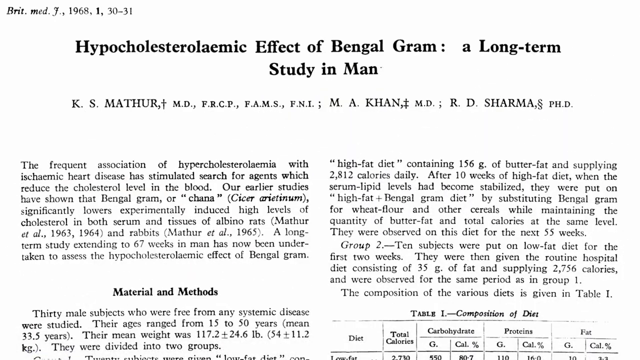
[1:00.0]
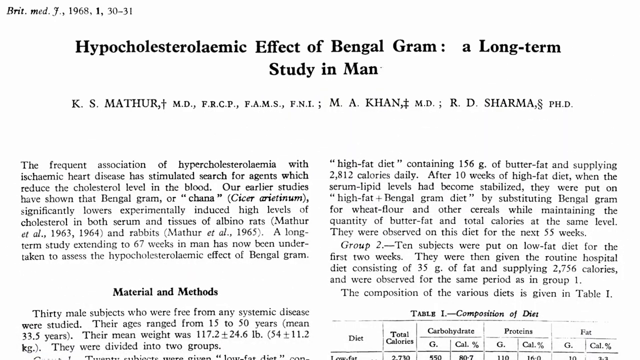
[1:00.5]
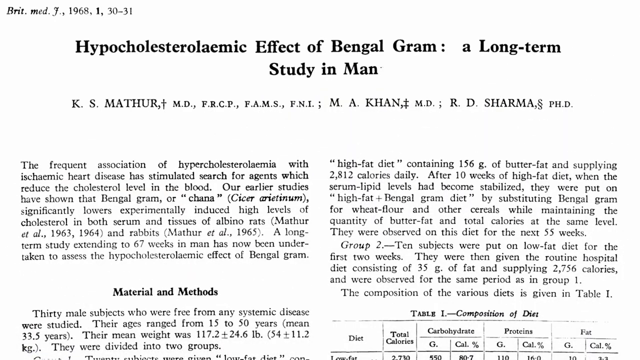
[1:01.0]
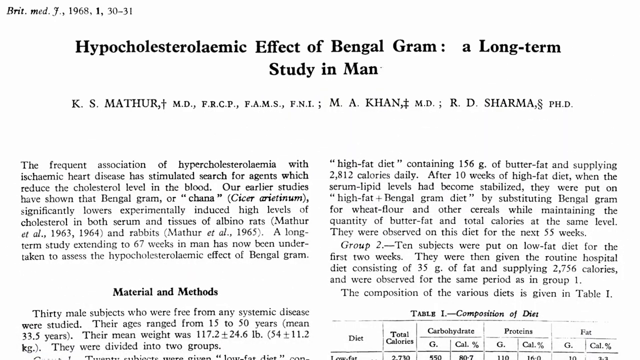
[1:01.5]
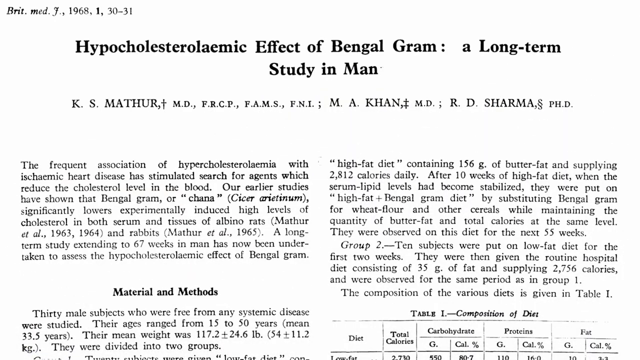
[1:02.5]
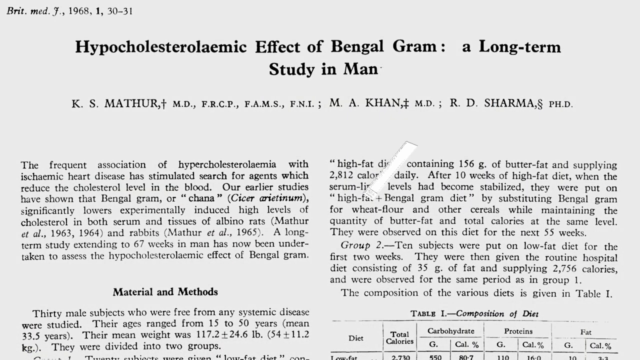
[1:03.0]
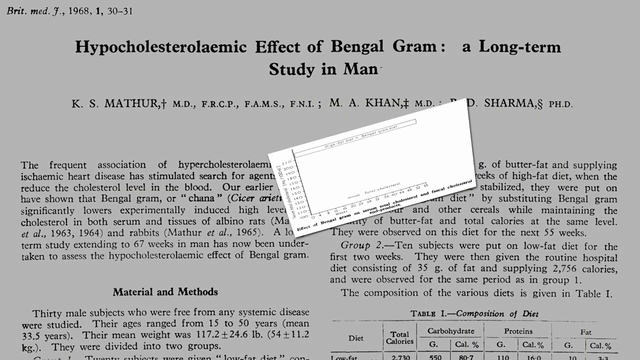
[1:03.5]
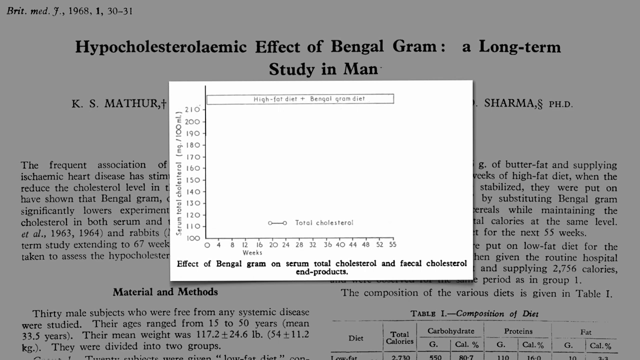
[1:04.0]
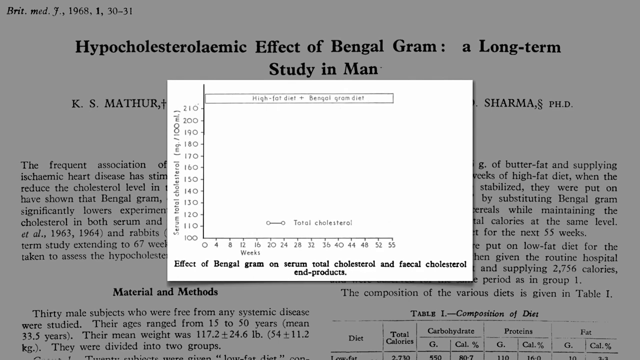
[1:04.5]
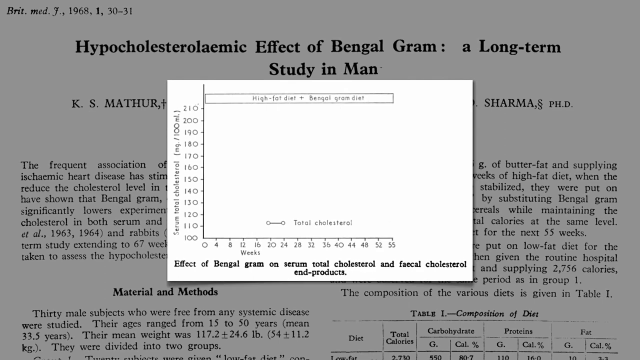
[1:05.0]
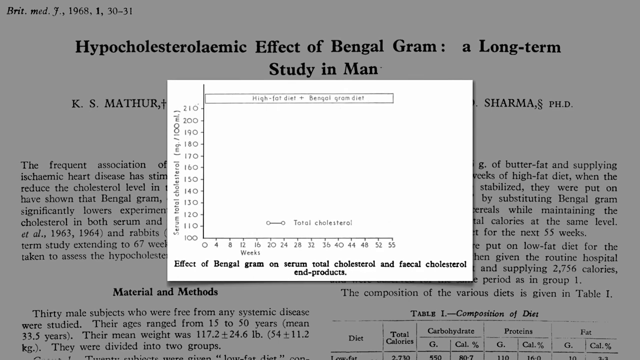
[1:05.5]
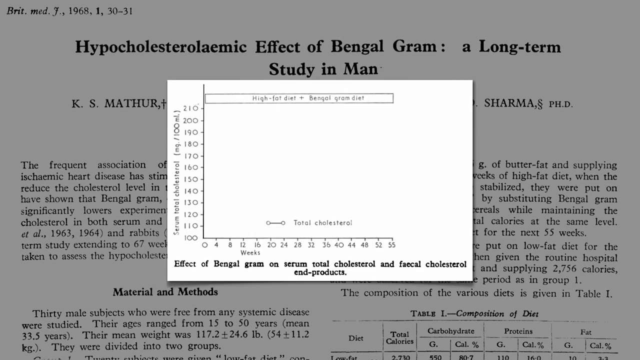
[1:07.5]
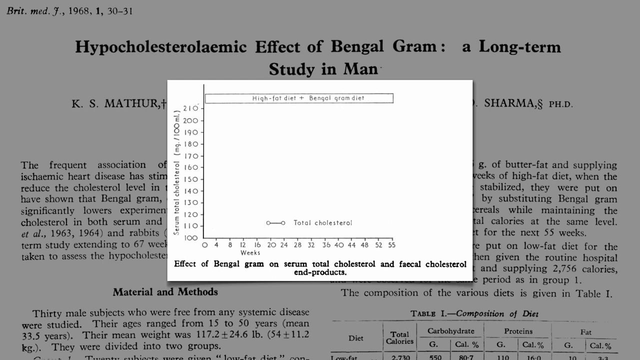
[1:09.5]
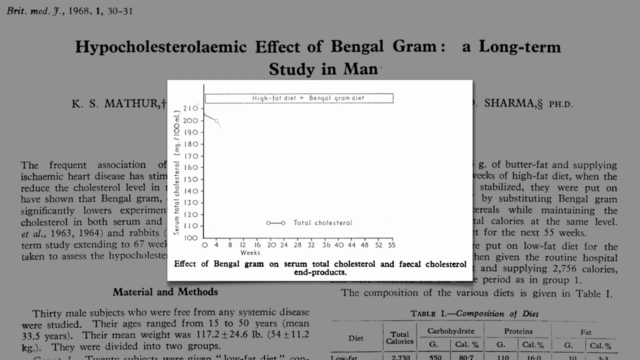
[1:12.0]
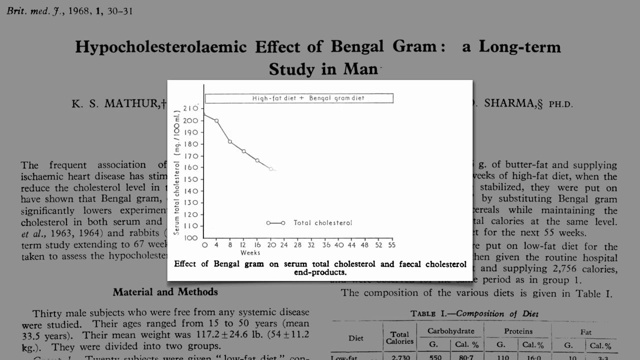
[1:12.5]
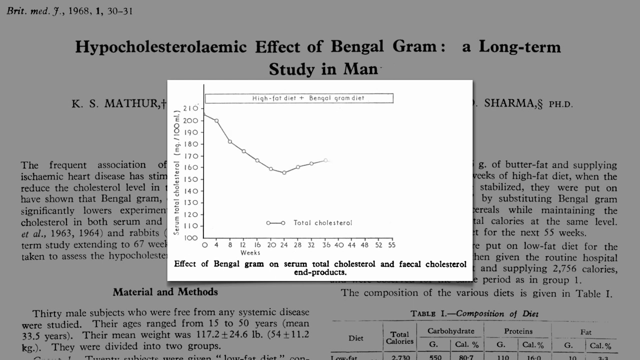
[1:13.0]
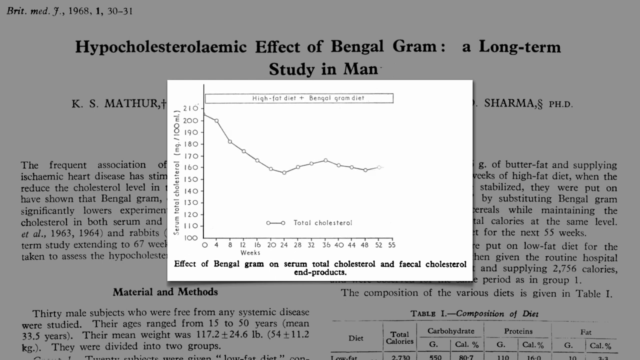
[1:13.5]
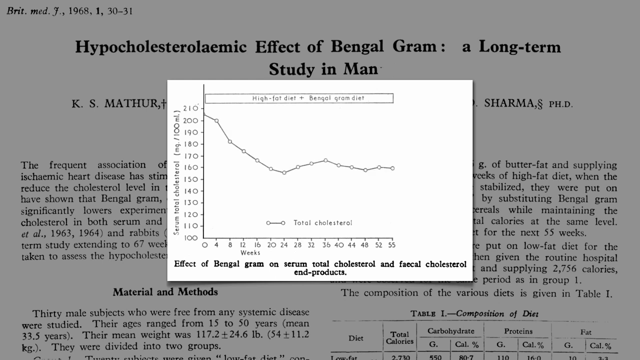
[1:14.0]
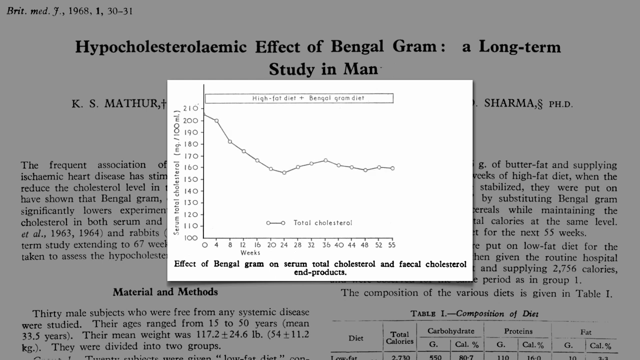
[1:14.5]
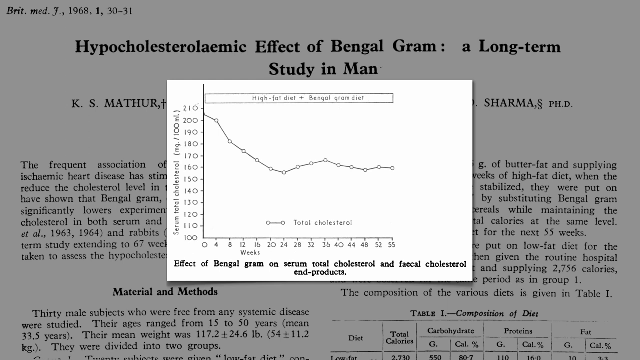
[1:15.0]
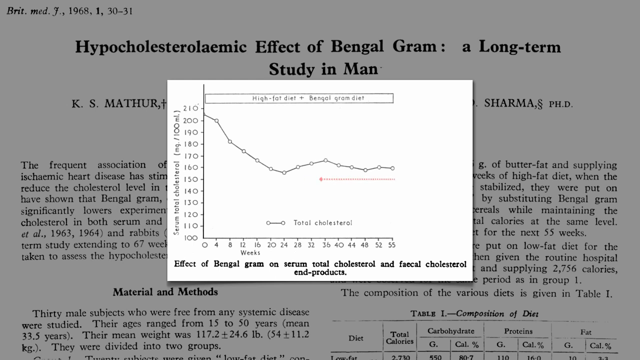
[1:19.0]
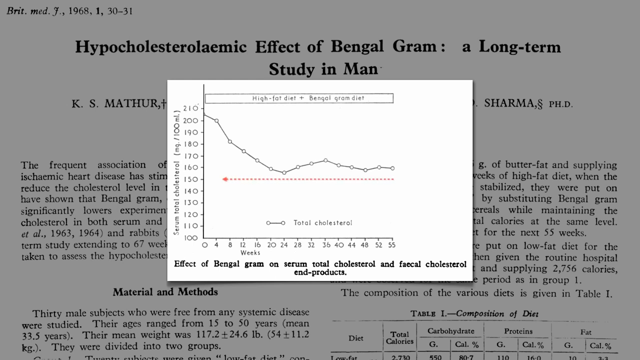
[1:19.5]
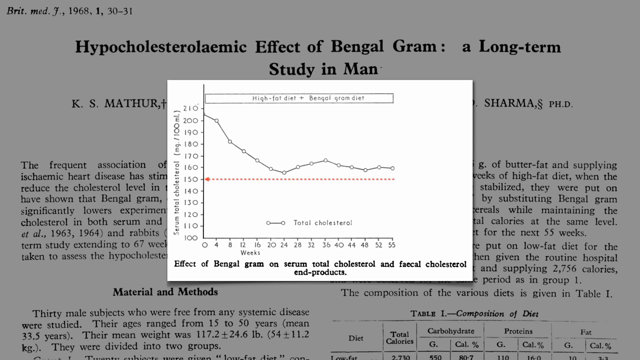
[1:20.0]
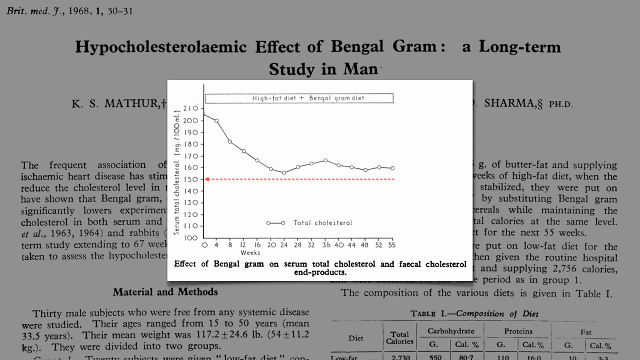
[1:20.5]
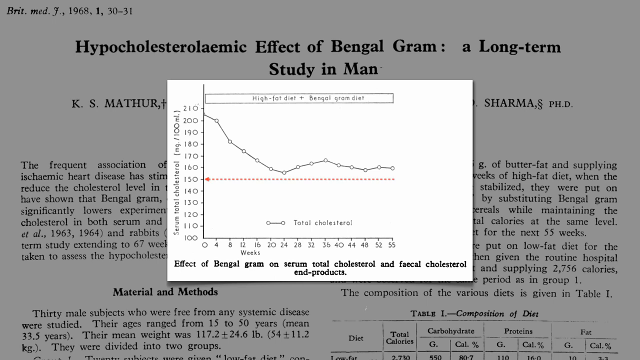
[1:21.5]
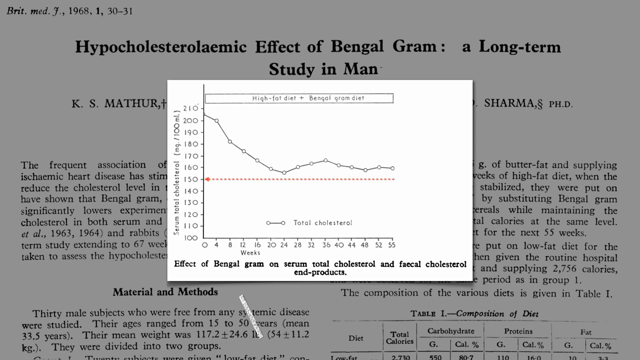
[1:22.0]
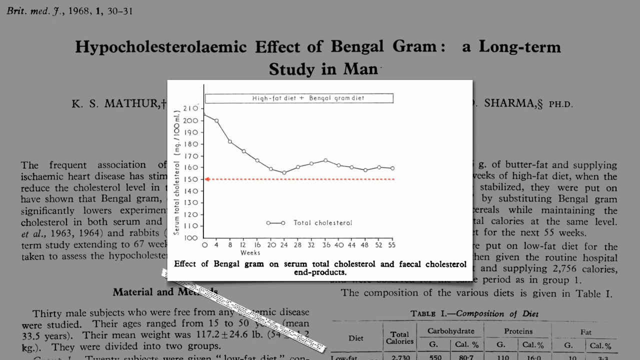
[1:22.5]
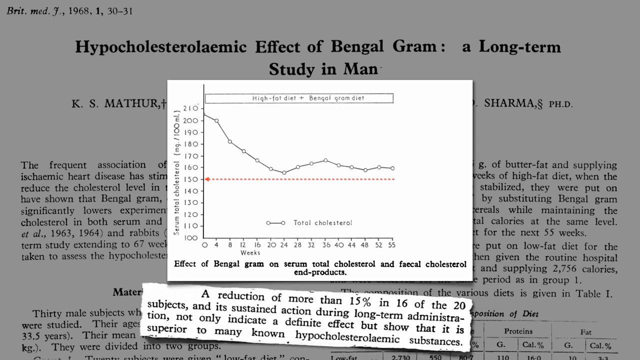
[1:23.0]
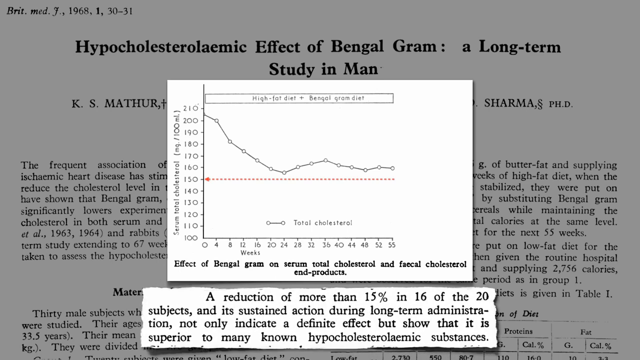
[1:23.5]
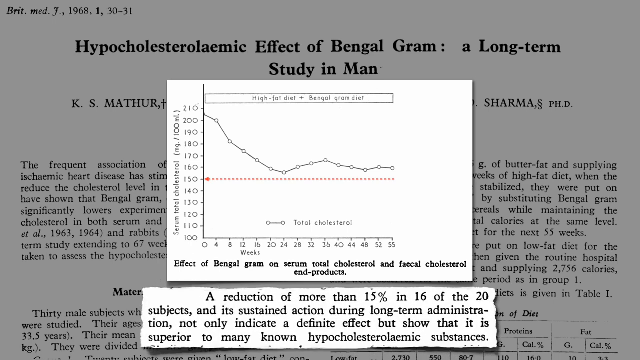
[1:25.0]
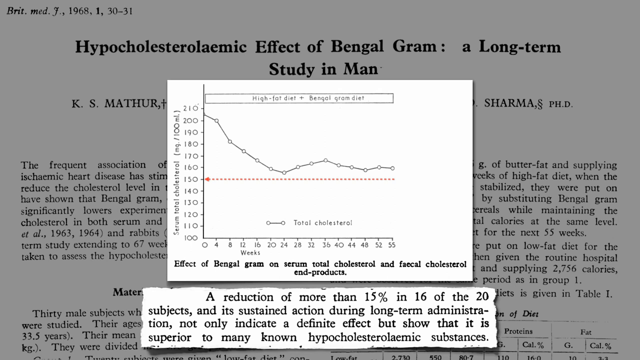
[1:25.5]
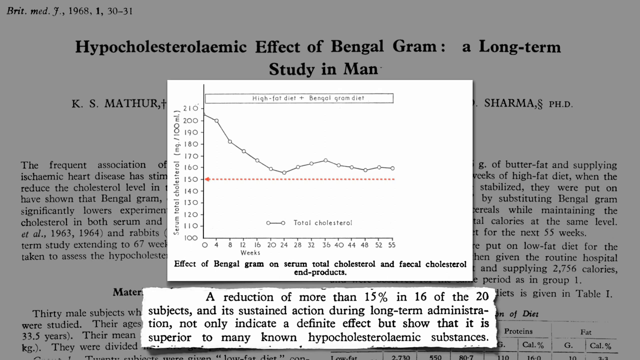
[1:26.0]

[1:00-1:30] A journal article written by K.S. Mathur, titled "Hypocholesterolemic effect of Bengal gram, a long-term study in man", is shown, with co-authors M. A. Khan and R. D. Sherma. One of the co-authors seems to be a medical doctor and the other a PhD student, and the main author also seems to be a medical doctor. Only the first page of the study is shown. The view then zooms into a graph showing the effect of Bengal gram on serum total cholesterol and fecal cholesterol end products, with cholesterol declining as the weeks go on: a major decline across about 55 weeks, with a huge reduction in the first 24 weeks and stabilizing around 24 weeks. An excerpt also appears reading "a reduction of more than 15% in 16 of the 20 subjects and its sustained action during a long-term administration not only indicate a definite effect, but show that it is superior to many known alternatives".